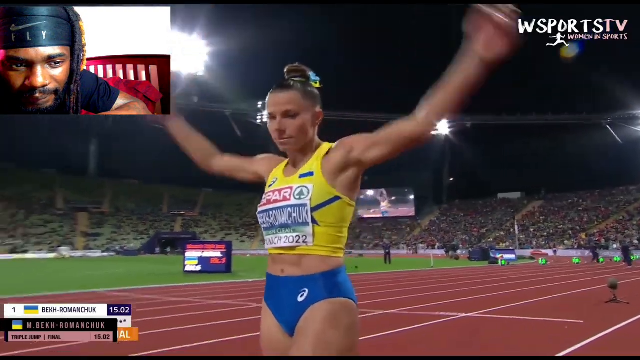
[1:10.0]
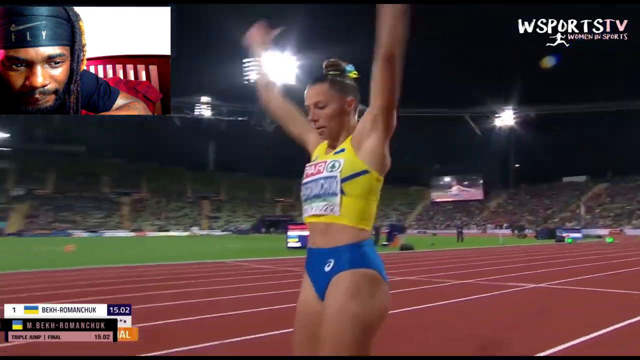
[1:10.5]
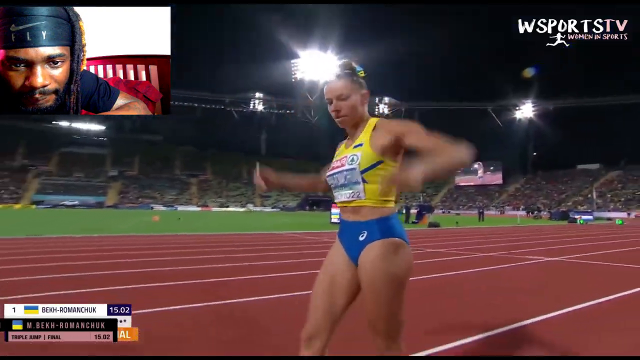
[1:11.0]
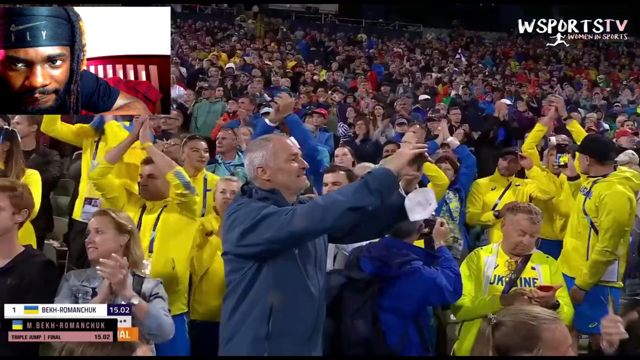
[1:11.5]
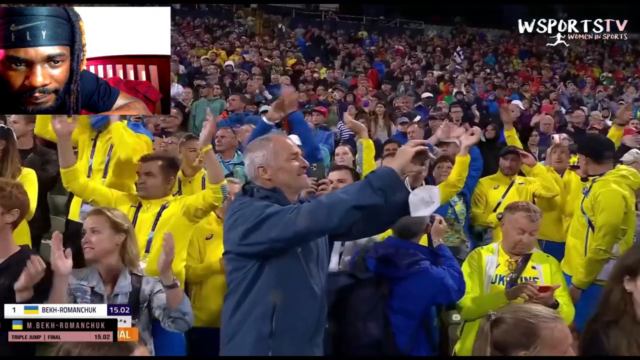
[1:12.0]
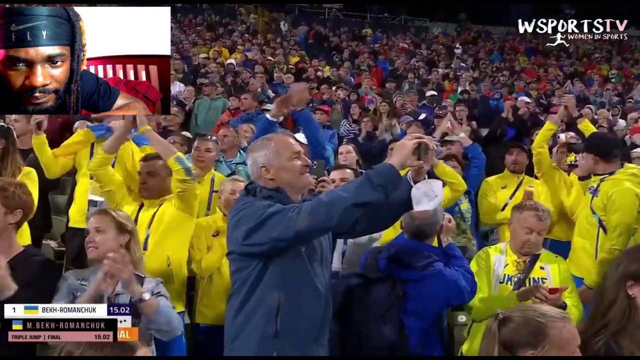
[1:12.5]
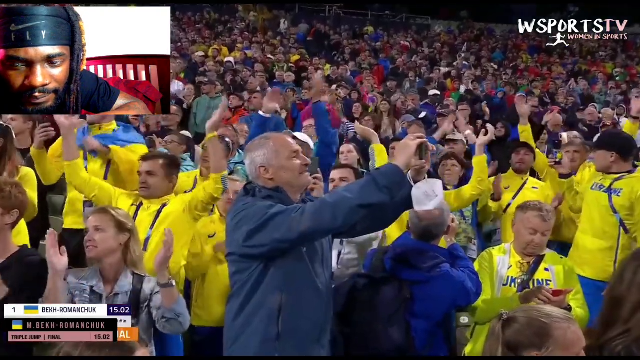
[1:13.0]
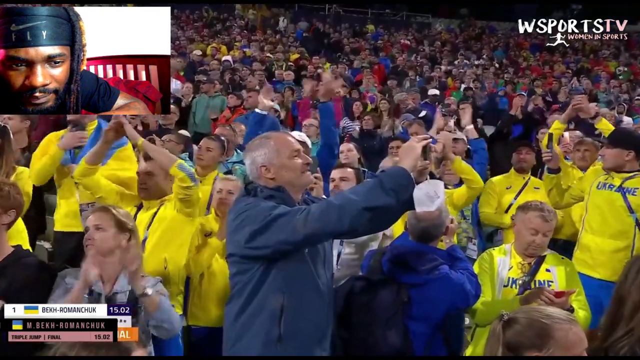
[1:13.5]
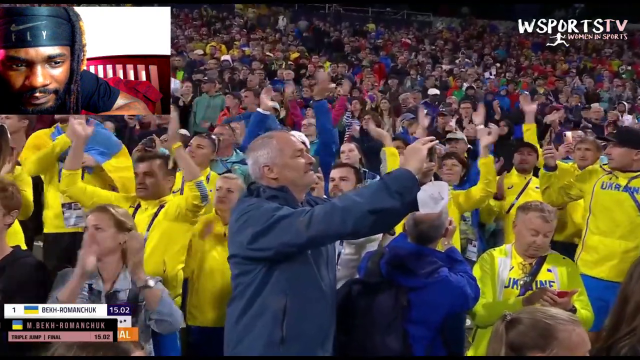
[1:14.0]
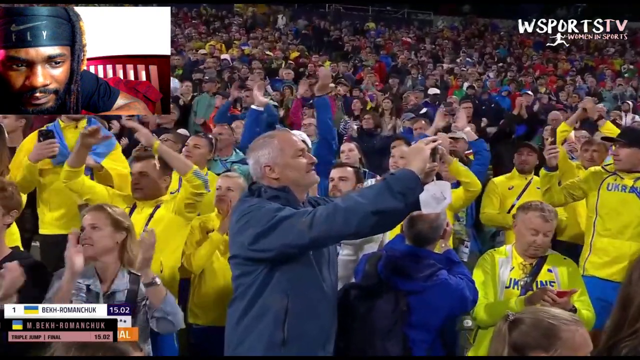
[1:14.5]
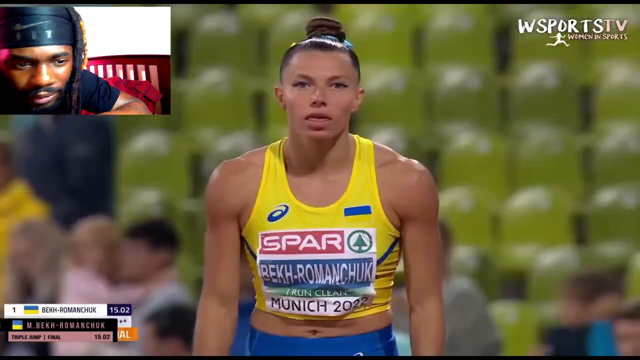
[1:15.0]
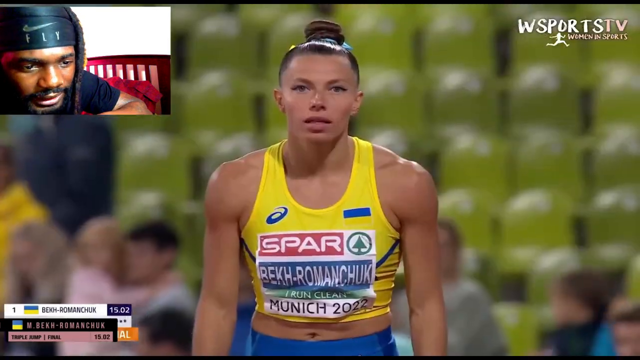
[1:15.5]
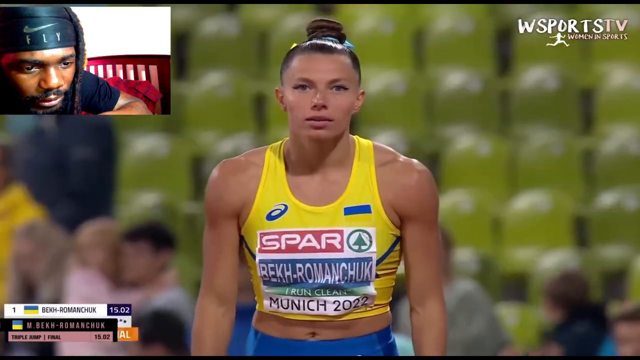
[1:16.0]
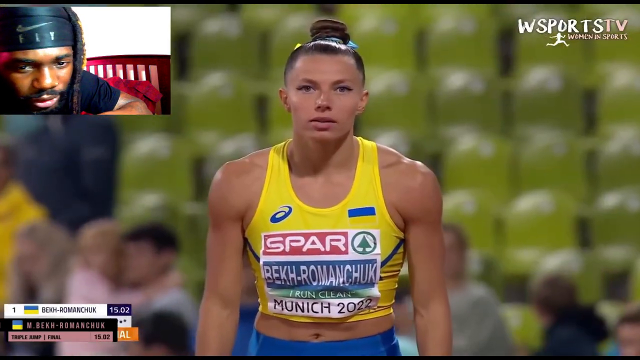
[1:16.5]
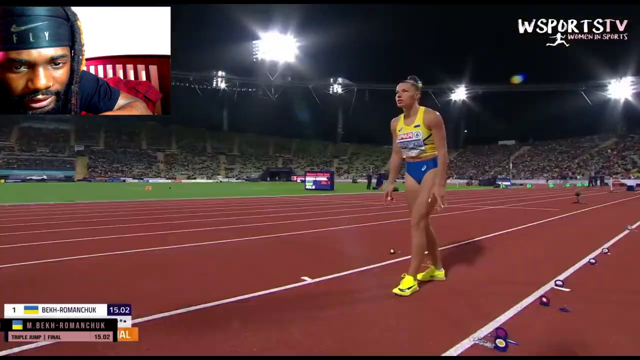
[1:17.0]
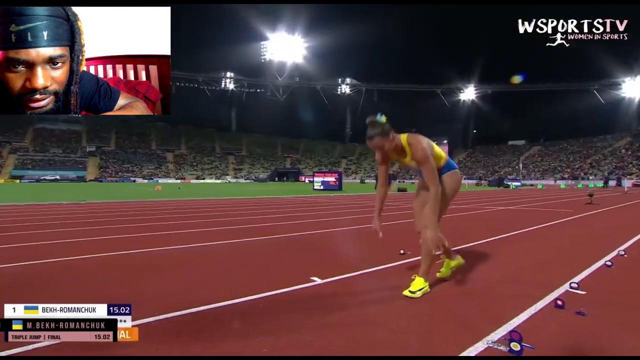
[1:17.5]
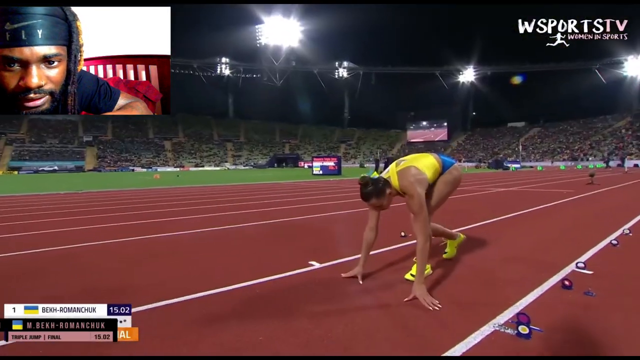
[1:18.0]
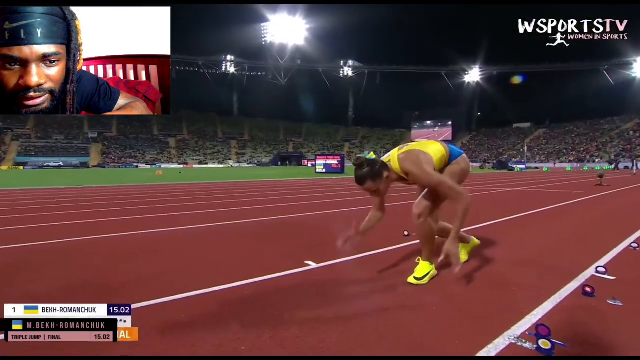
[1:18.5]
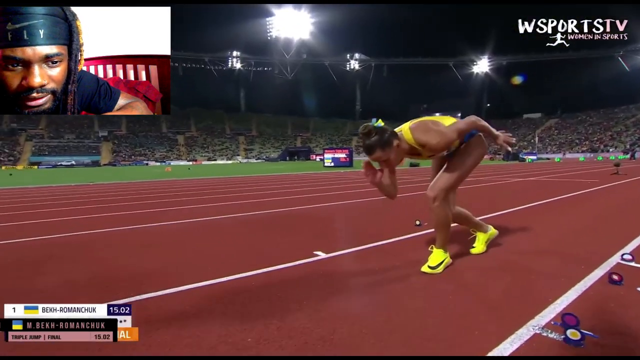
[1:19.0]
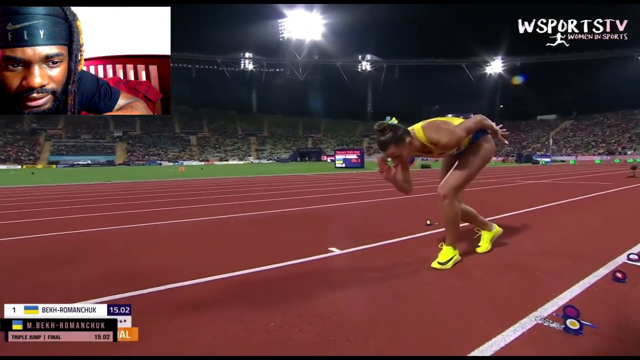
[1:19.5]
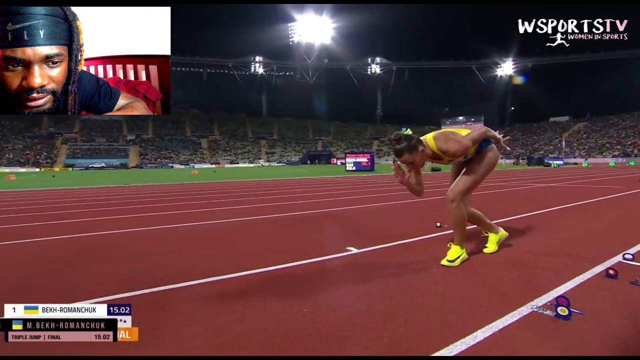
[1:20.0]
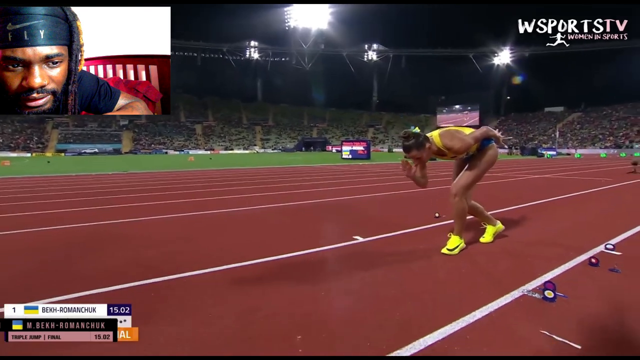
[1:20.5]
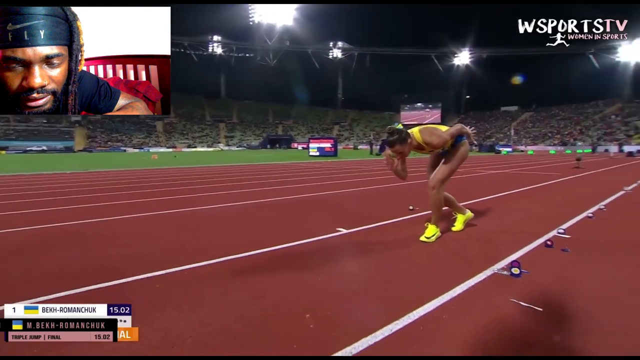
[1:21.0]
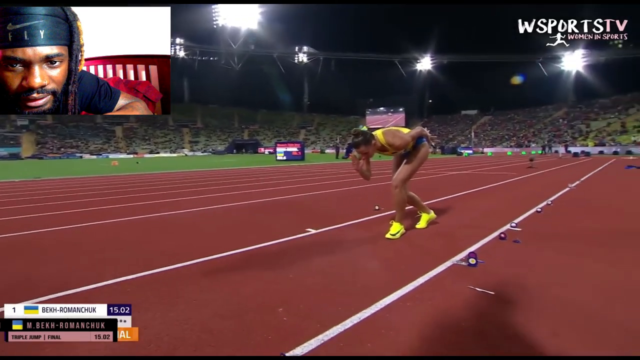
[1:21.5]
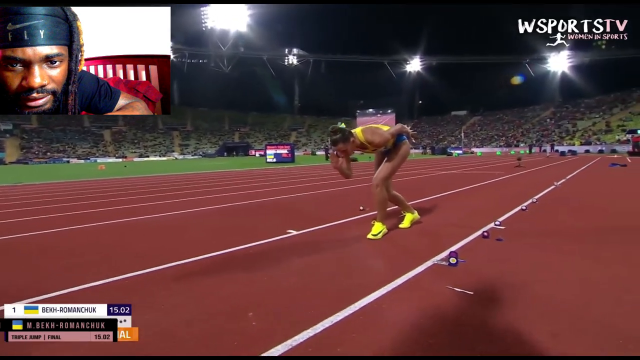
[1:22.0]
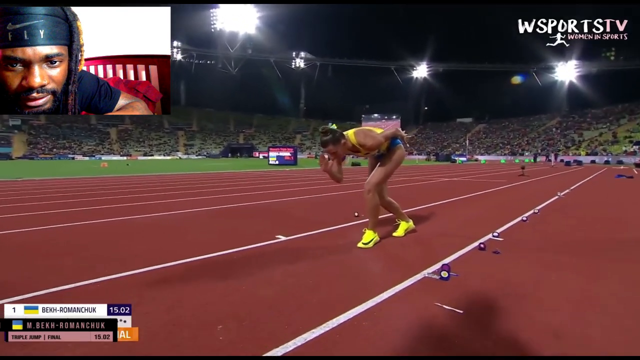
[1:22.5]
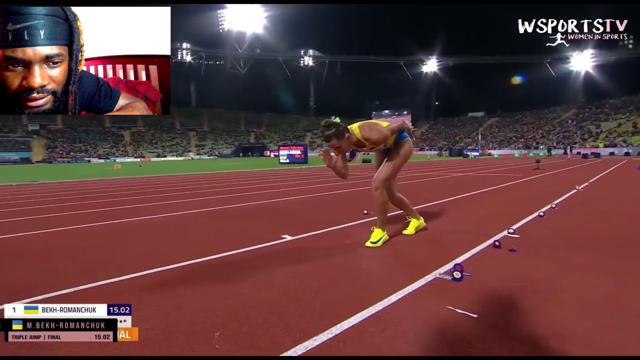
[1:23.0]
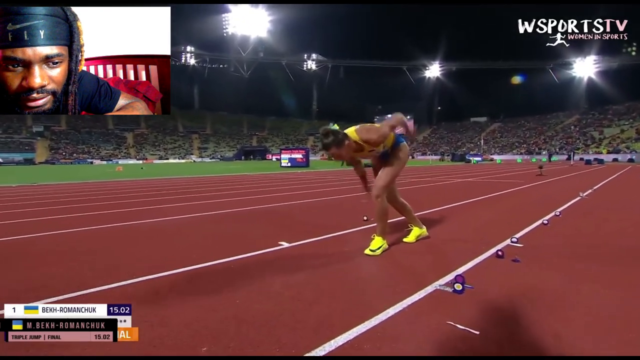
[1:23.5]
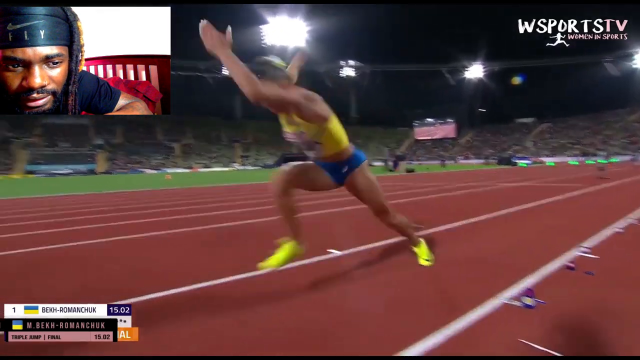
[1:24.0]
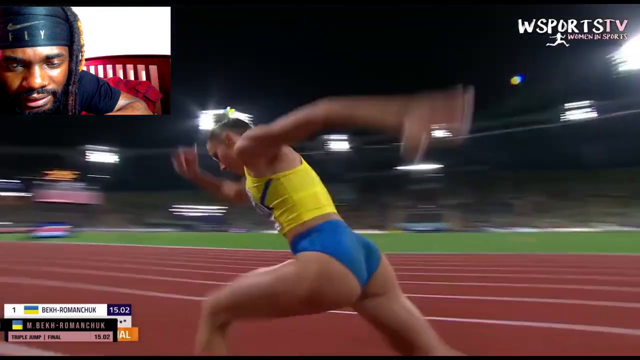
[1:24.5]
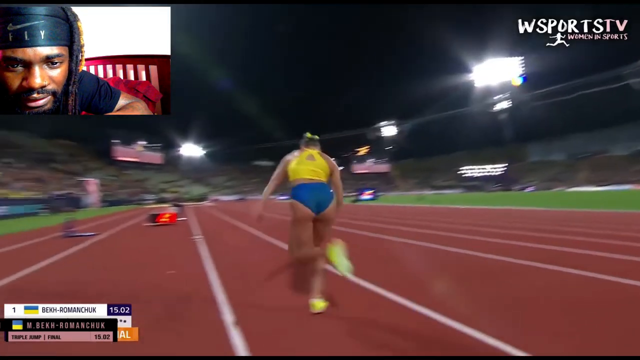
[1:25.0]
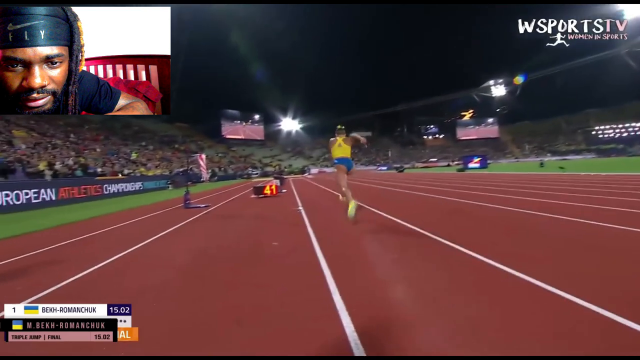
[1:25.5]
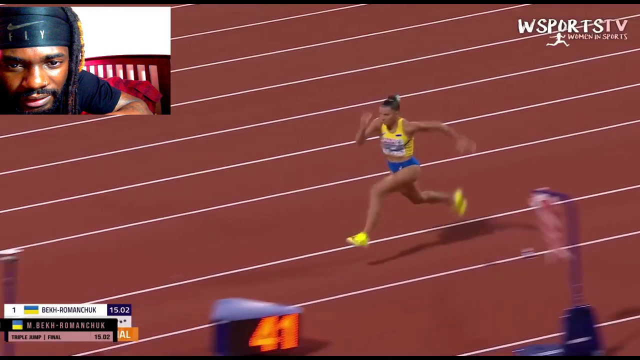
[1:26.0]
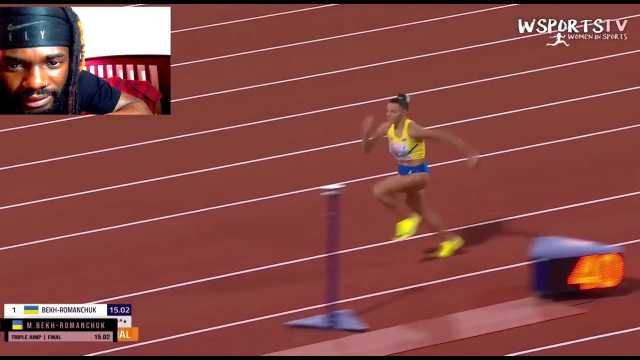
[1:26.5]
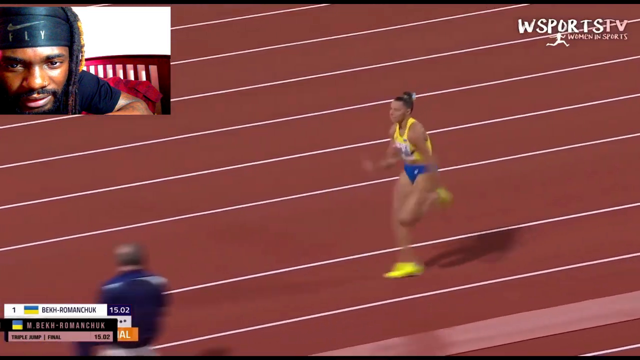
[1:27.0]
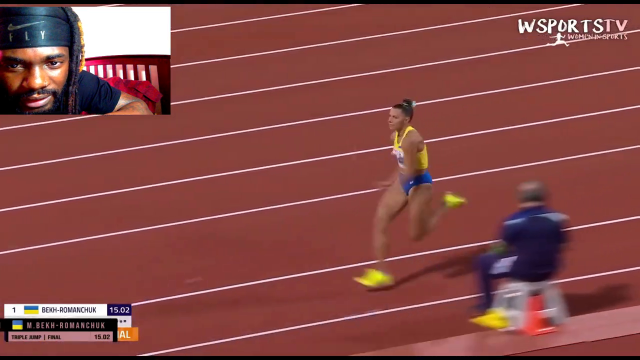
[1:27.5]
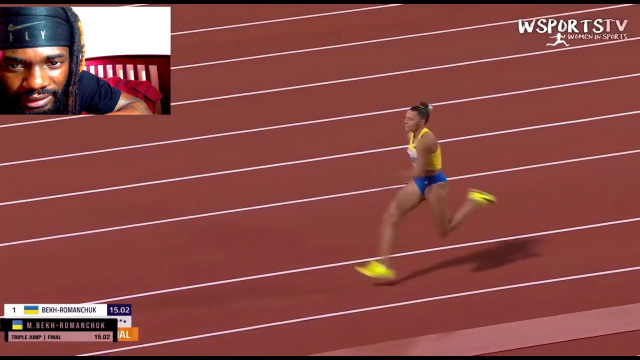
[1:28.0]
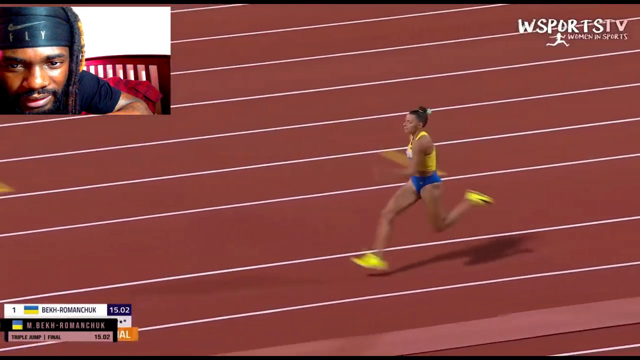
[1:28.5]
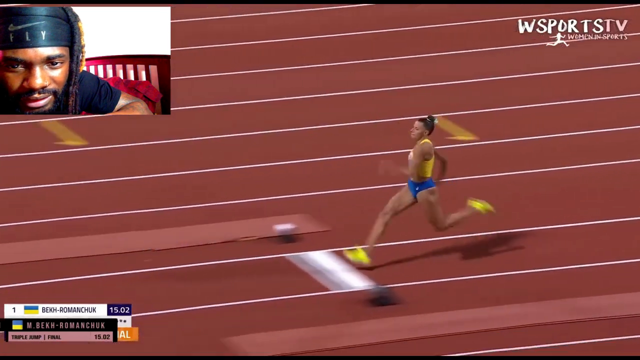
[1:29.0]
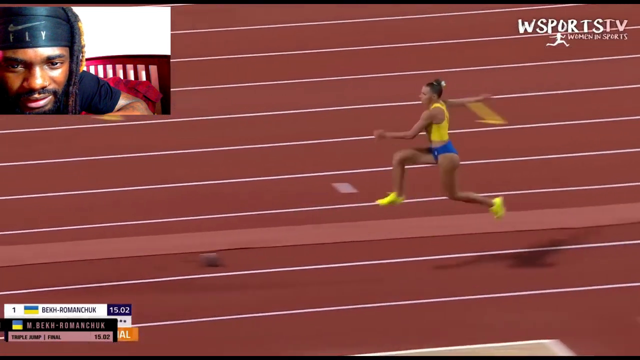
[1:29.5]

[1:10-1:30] The woman continues clapping, and then the crowd is shown. A man in the middle appears to be filming the people right behind him as they clap along with her. A close-up then shows her getting ready to run, tapping her feet. She takes off running, and when she reaches the line she steps on it, possibly overstepping it. The shot continues until just before her final jump into the sand.